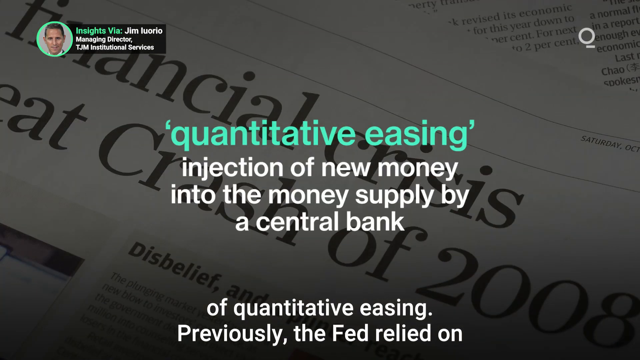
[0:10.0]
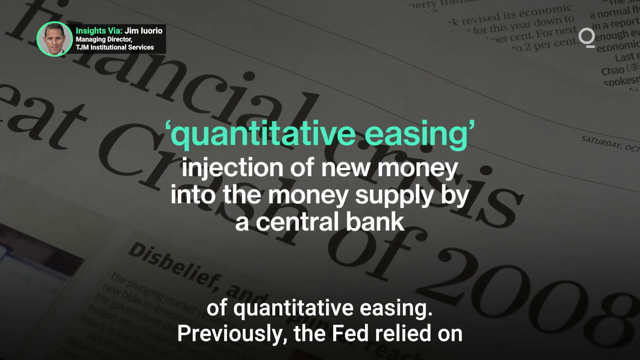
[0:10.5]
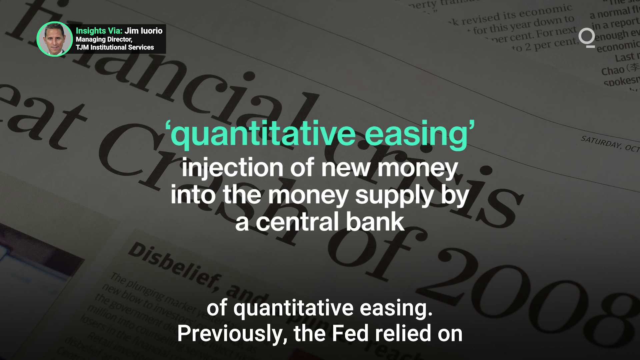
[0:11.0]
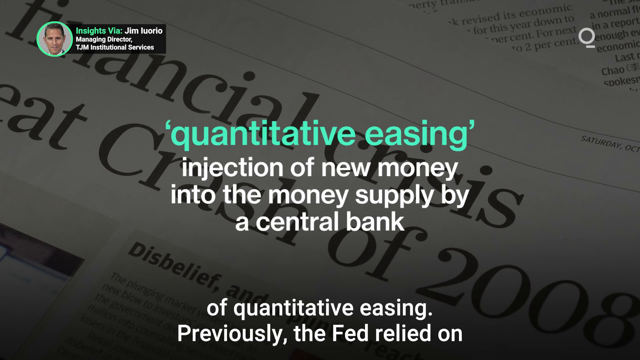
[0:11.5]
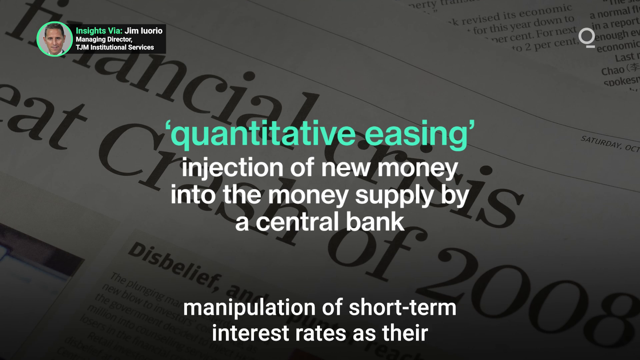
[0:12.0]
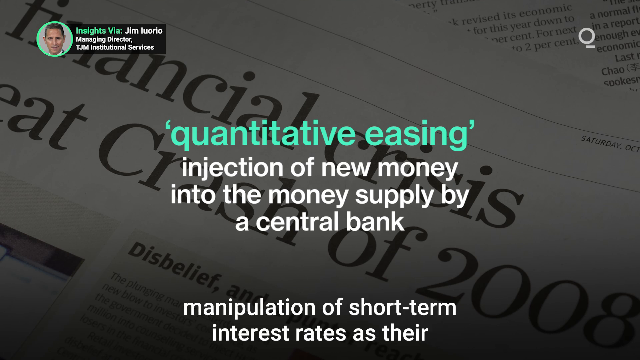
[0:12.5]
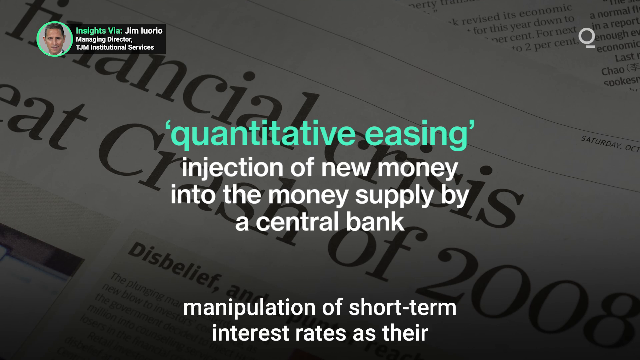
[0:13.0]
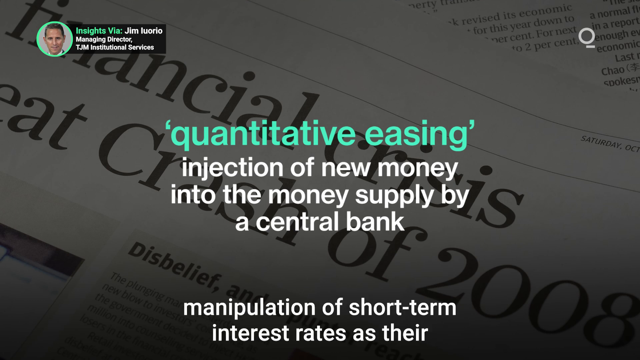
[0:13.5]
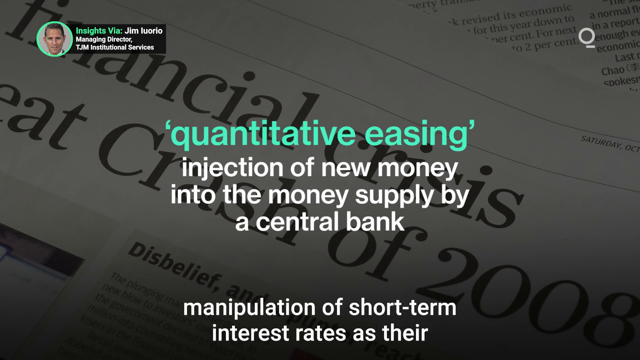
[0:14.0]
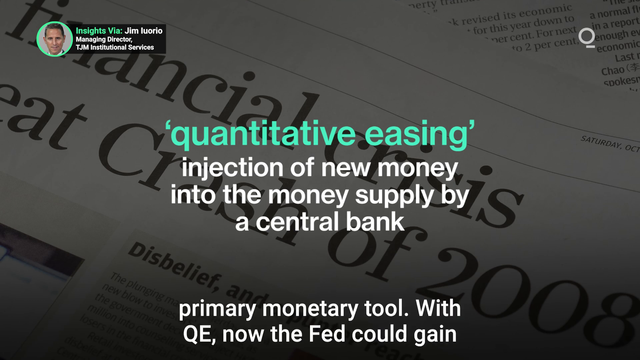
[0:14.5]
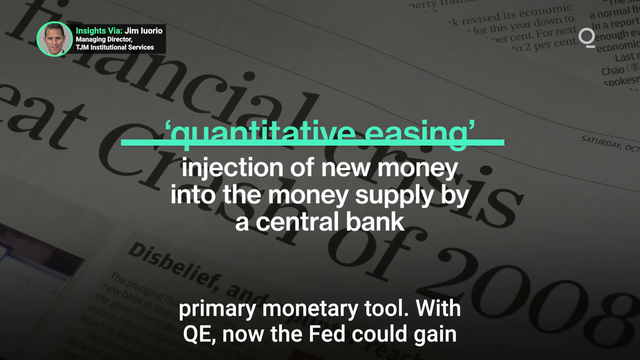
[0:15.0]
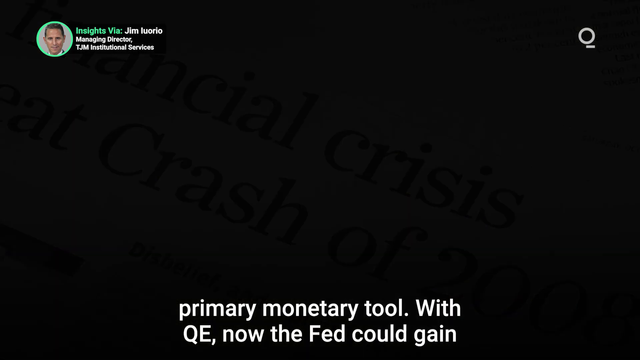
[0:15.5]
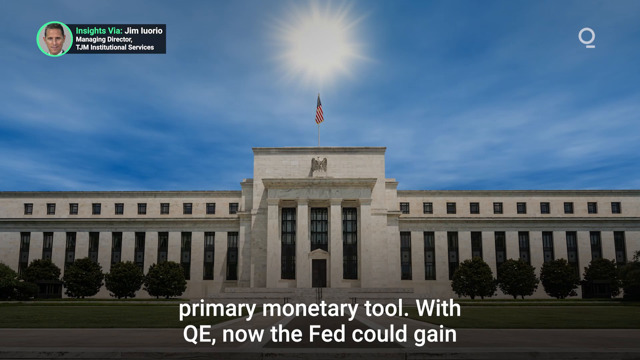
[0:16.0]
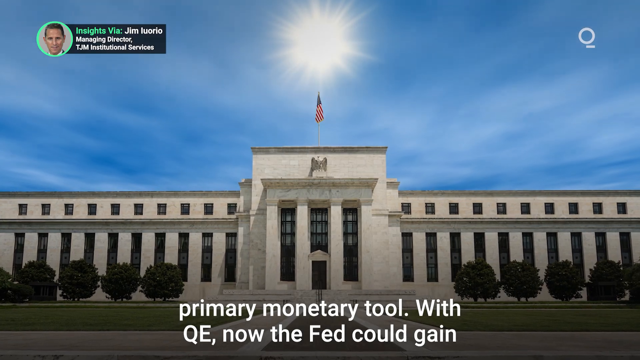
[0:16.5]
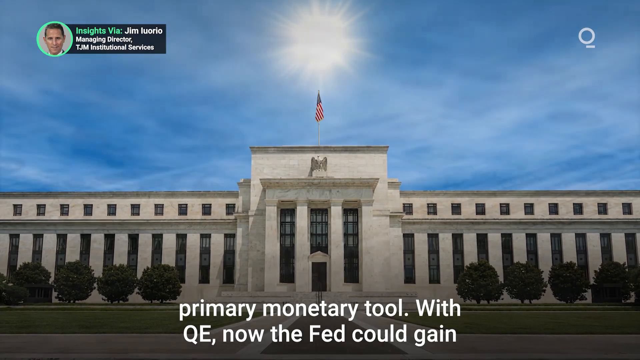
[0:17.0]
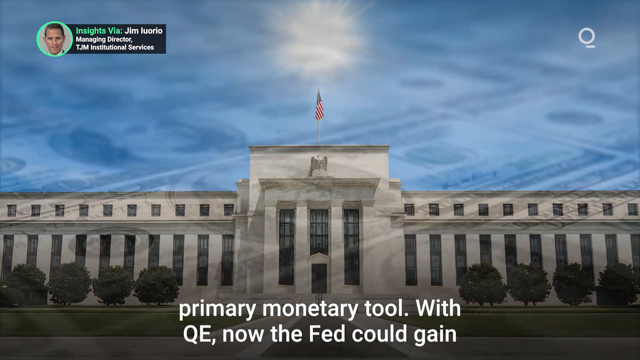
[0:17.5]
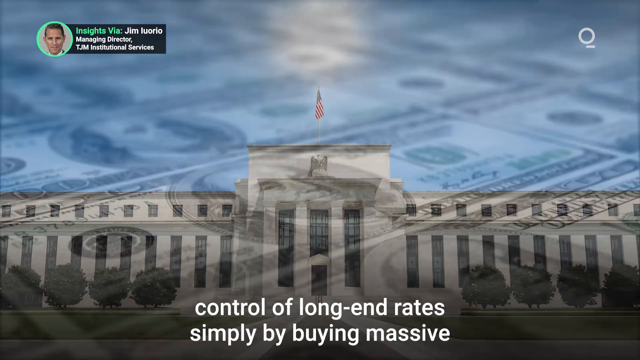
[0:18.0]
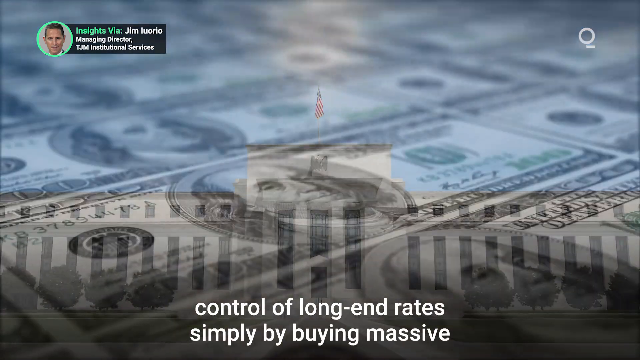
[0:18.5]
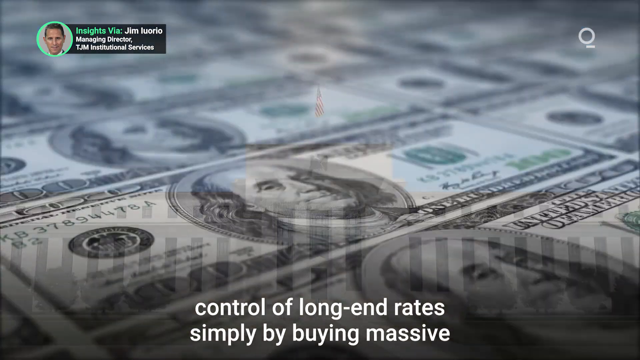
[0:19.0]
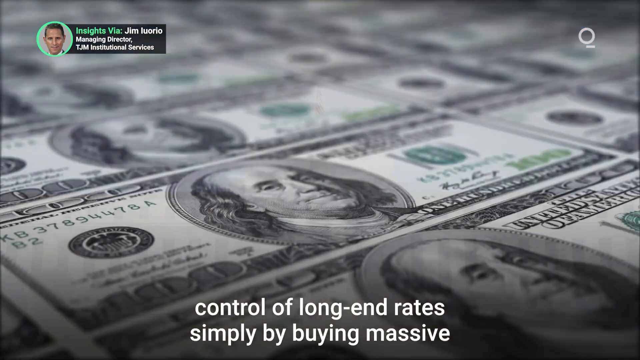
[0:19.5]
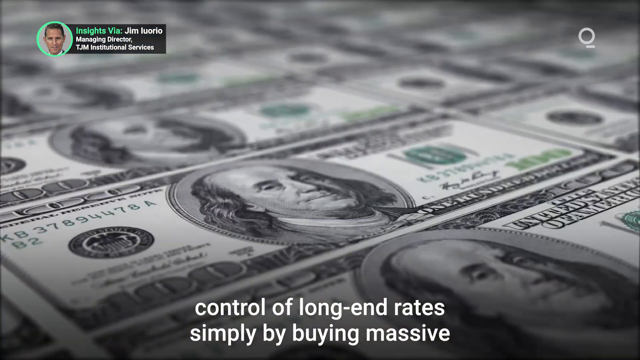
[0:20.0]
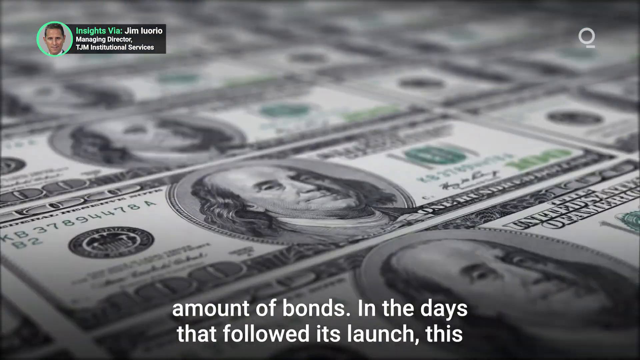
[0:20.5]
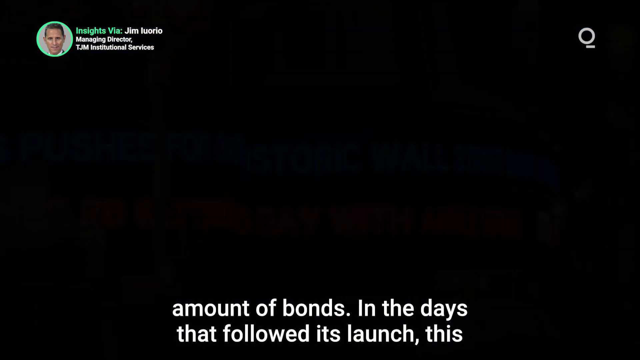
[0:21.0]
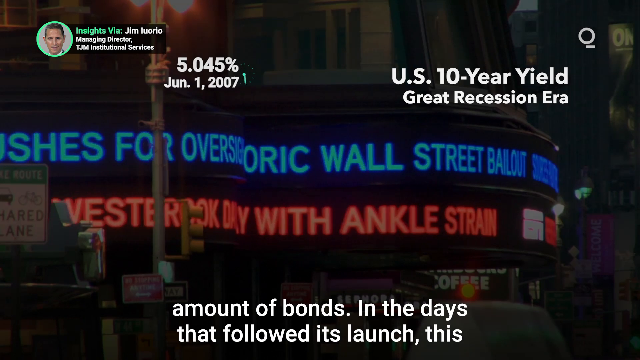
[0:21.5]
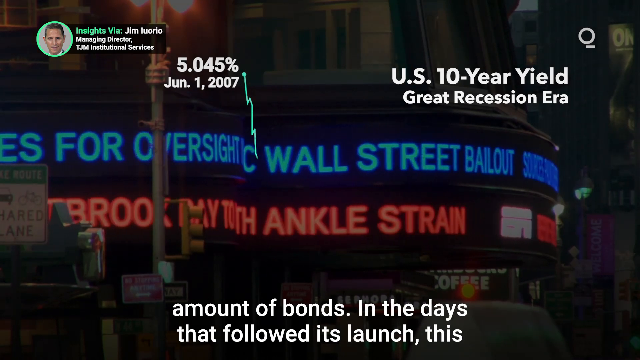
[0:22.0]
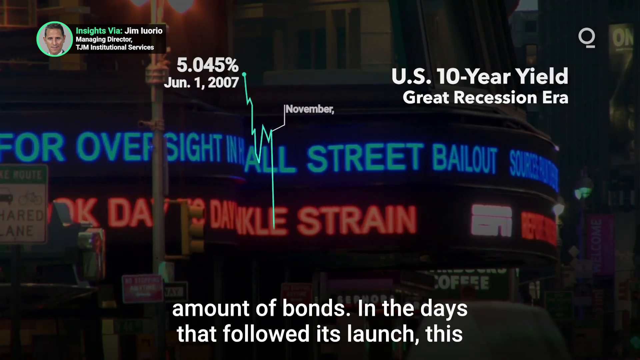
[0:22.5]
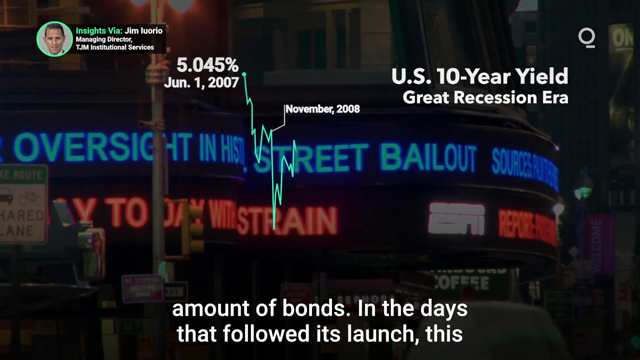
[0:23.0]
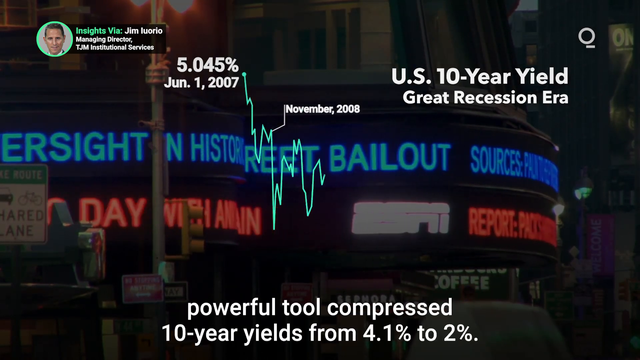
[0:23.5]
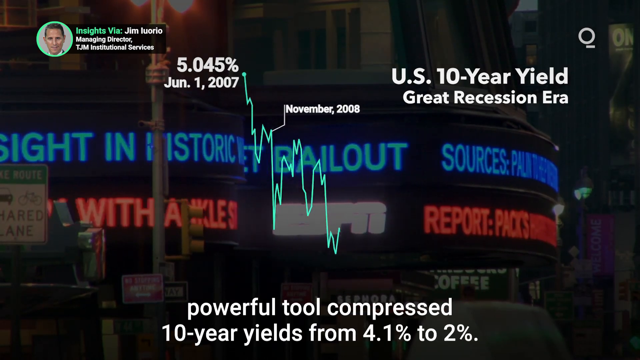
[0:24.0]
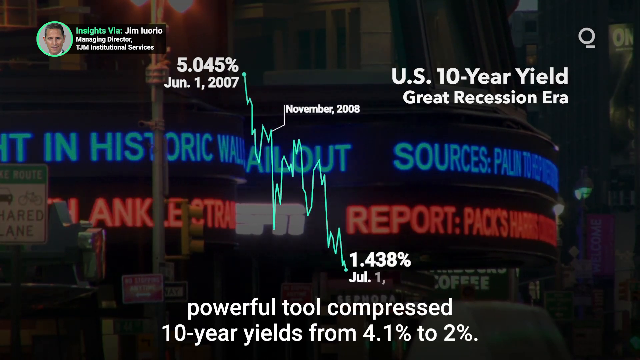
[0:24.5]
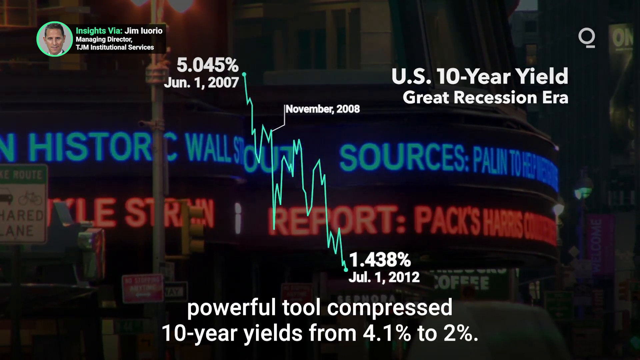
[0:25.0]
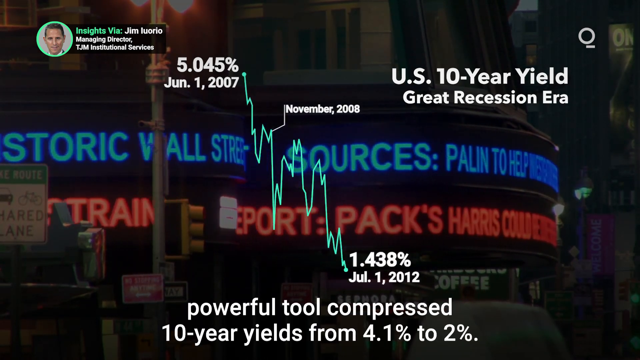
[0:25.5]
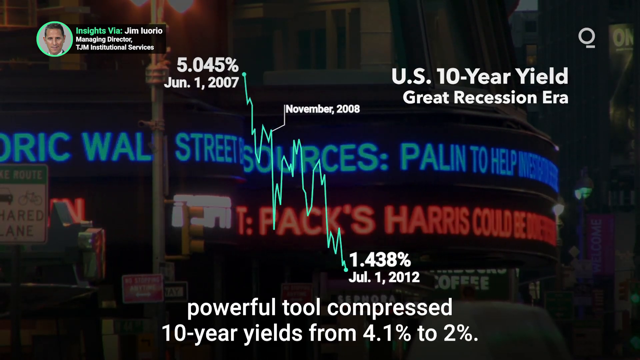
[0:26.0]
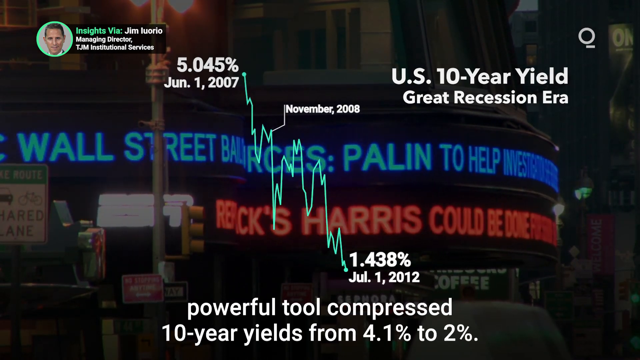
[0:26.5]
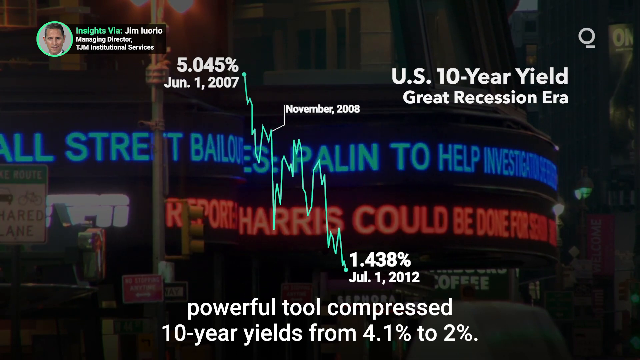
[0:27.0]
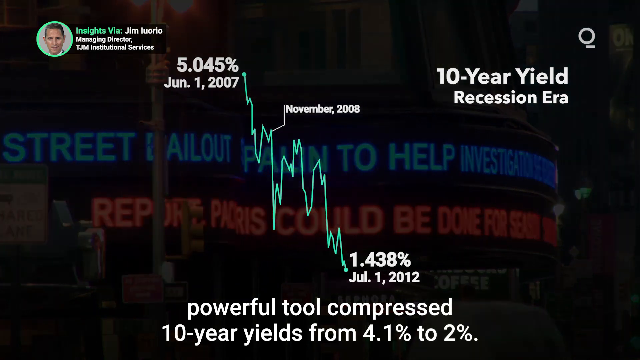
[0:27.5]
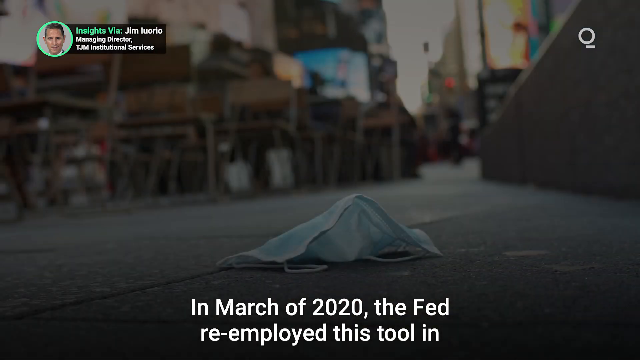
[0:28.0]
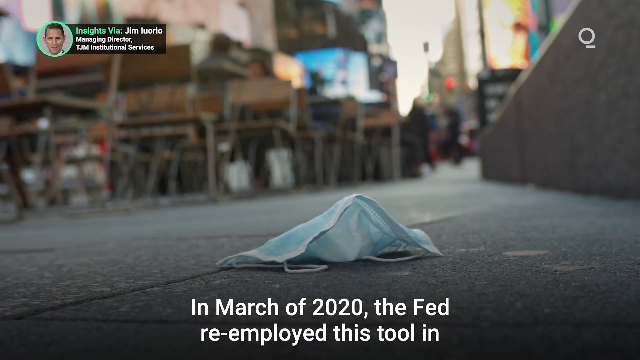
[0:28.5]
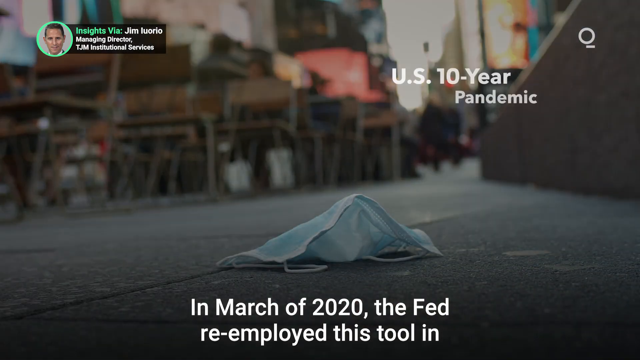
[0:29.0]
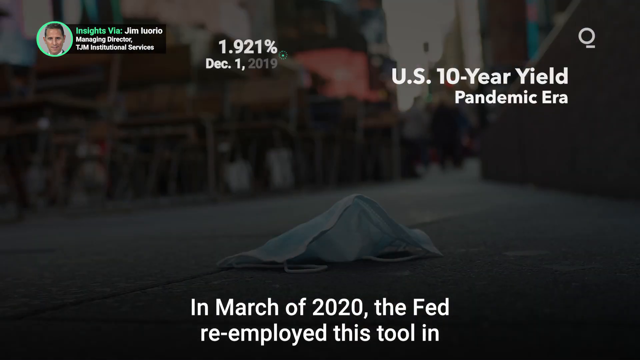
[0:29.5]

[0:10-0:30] A street appears with a COVID mask lying by itself in the middle of it. The business newscast continues, and the newspaper is still behind. The Fed building is shown, along with neon signs that look like they are on Wall Street. The text "Manipulation of short term" appears. After the Fed, sheets of $100 bills are shown being made at the mint and piling up, and then a graph titled "10-year yield in the pandemic era" appears; the video apparently concerns economics during the COVID crisis. Text reads "'quantitative easing' injection of new money into the money supply by a central bank" and "In March of 2020, the Fed re-employed a tool." Rolling neon signs with red and blue fonts read "report Pax Harris could be done for."